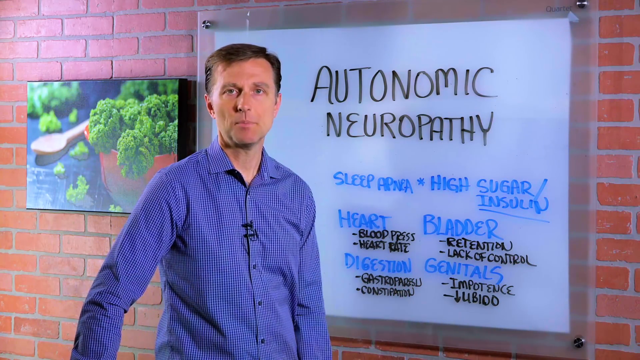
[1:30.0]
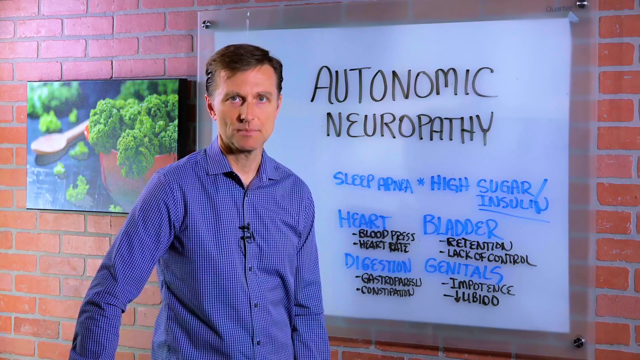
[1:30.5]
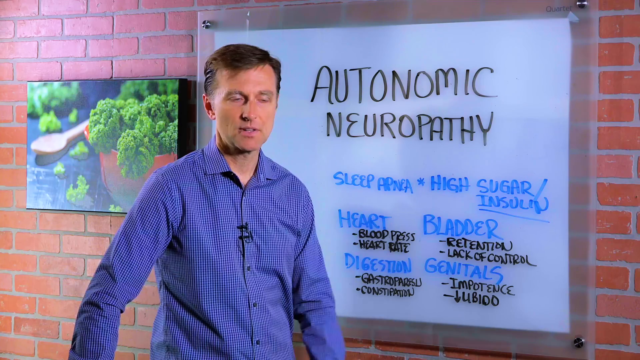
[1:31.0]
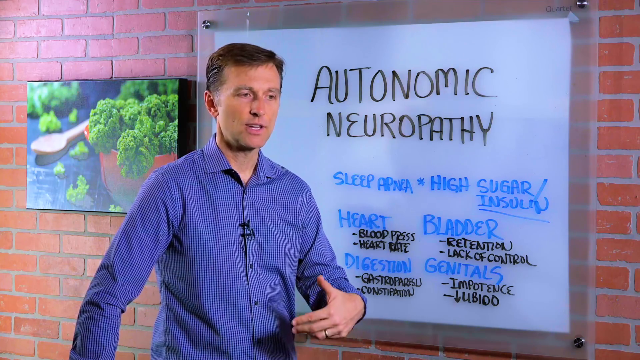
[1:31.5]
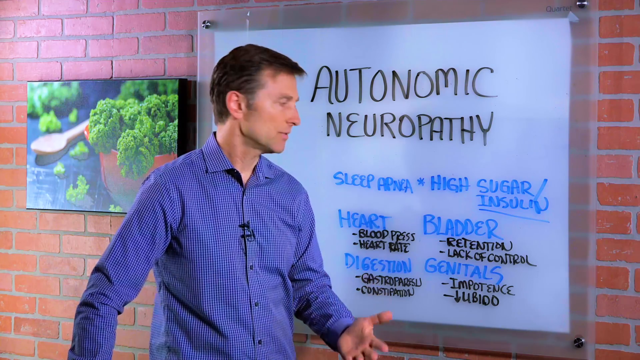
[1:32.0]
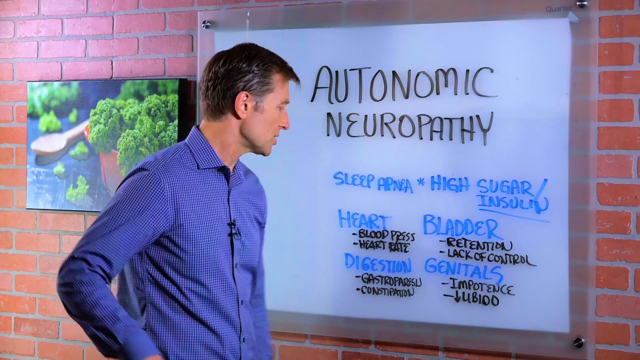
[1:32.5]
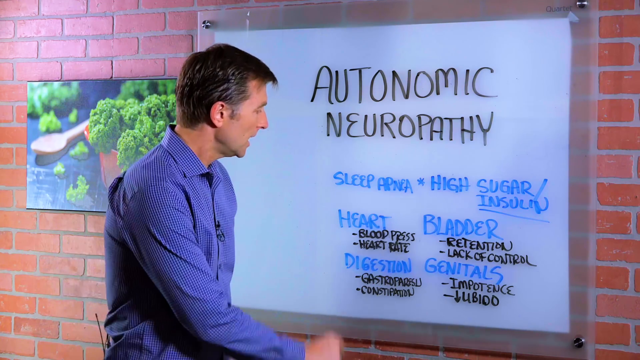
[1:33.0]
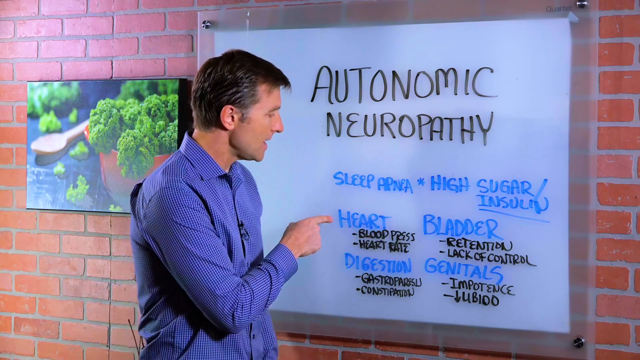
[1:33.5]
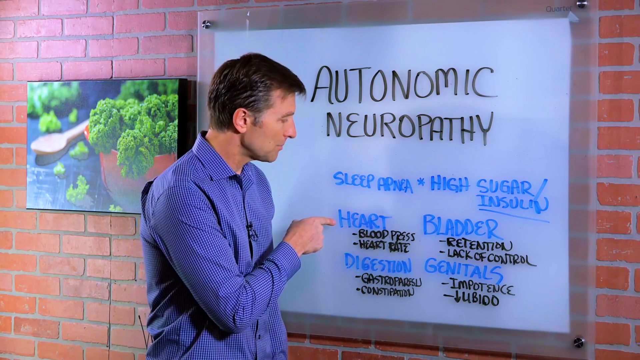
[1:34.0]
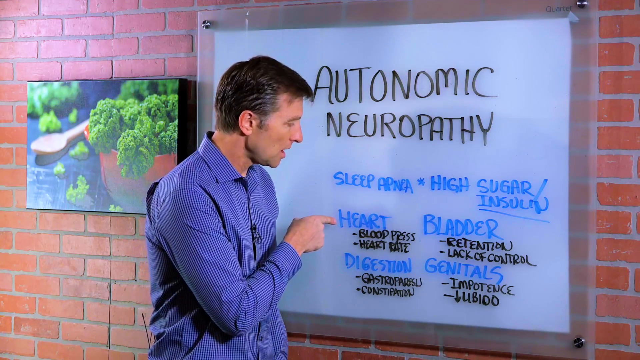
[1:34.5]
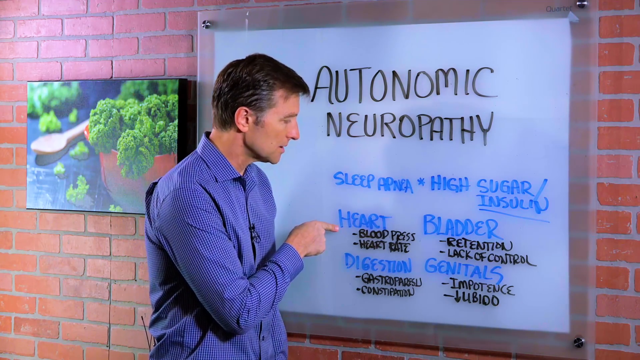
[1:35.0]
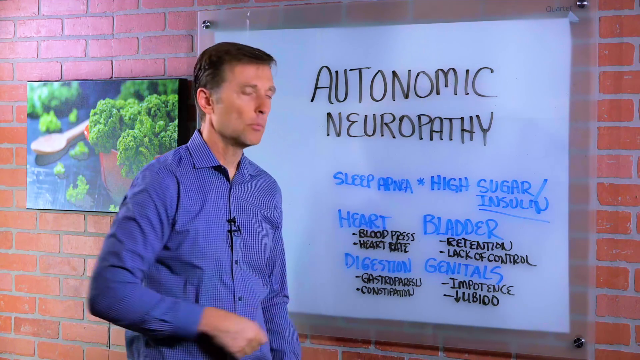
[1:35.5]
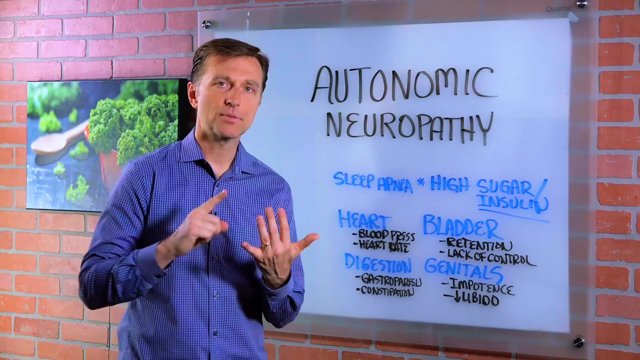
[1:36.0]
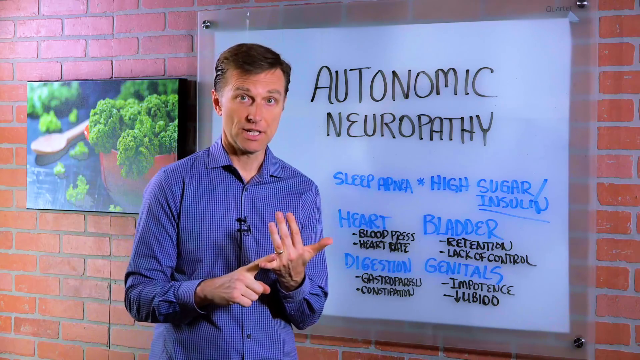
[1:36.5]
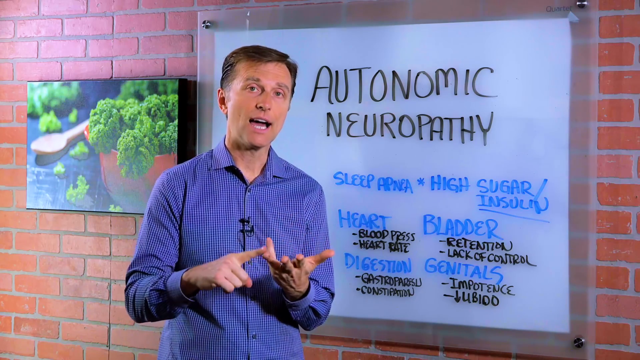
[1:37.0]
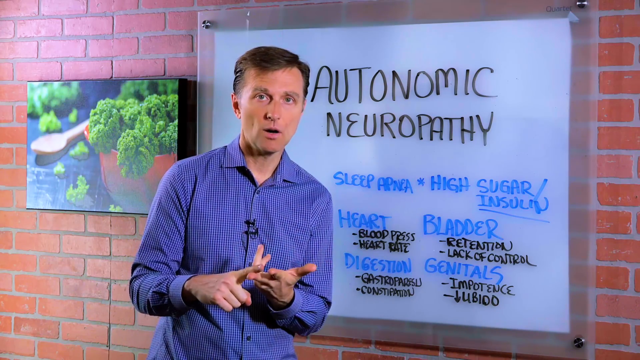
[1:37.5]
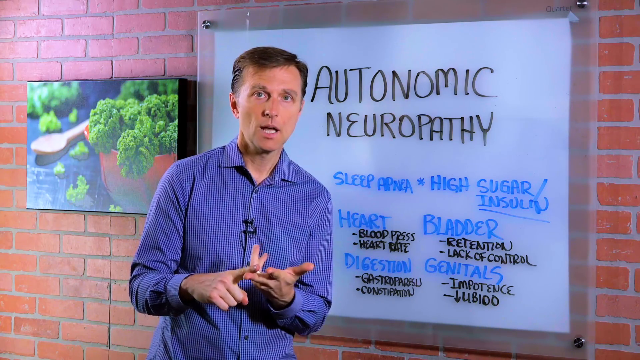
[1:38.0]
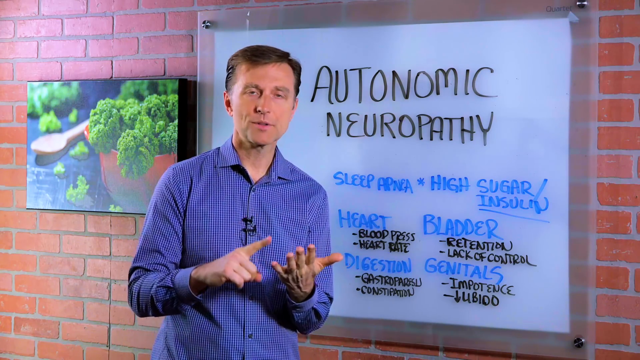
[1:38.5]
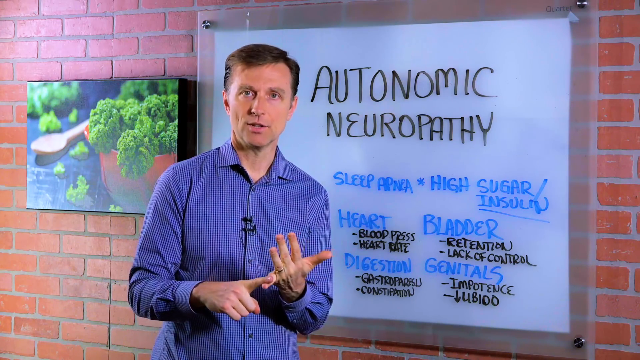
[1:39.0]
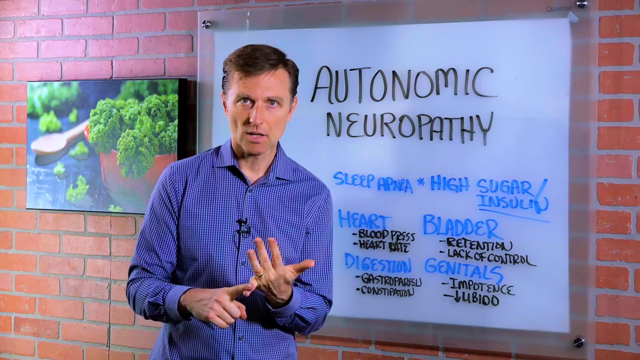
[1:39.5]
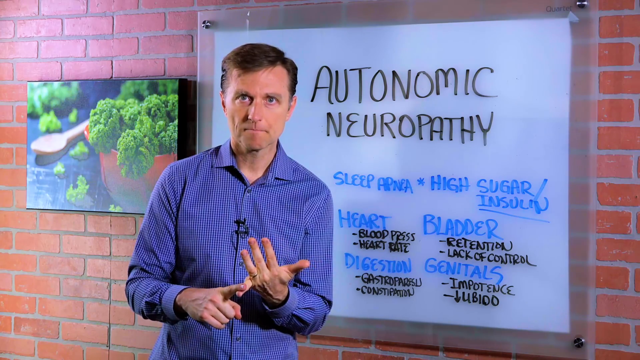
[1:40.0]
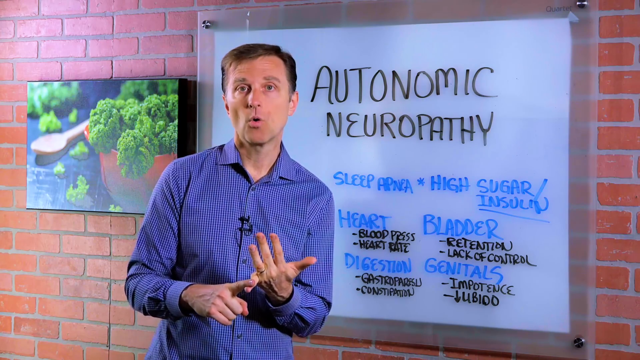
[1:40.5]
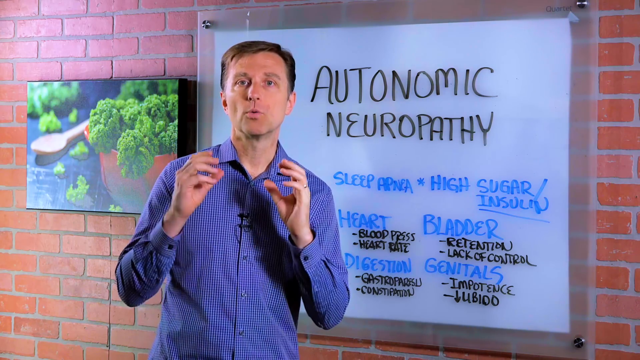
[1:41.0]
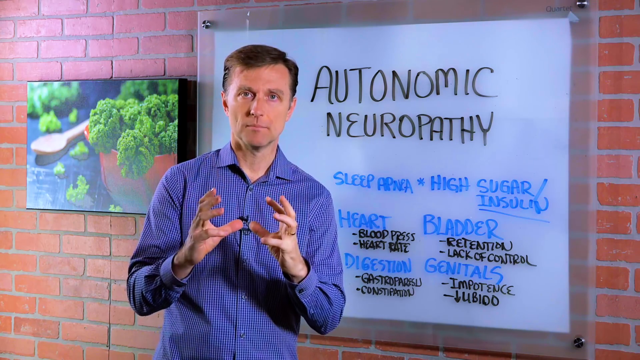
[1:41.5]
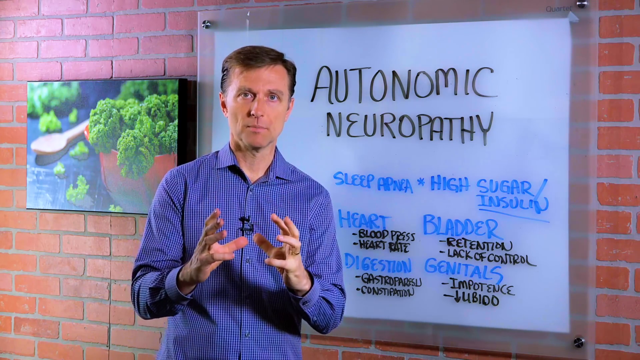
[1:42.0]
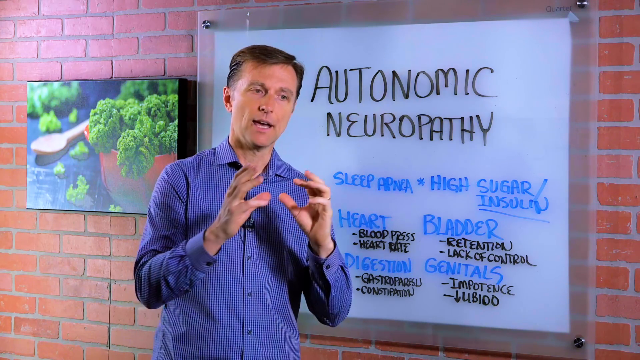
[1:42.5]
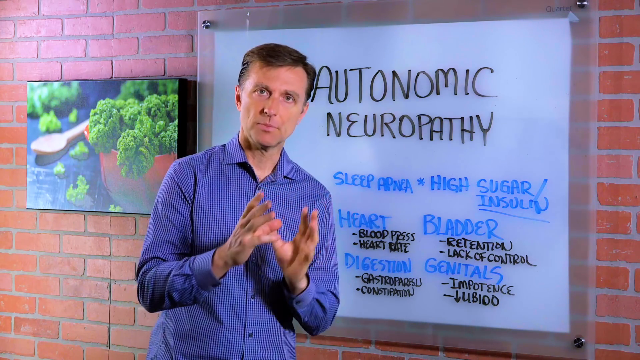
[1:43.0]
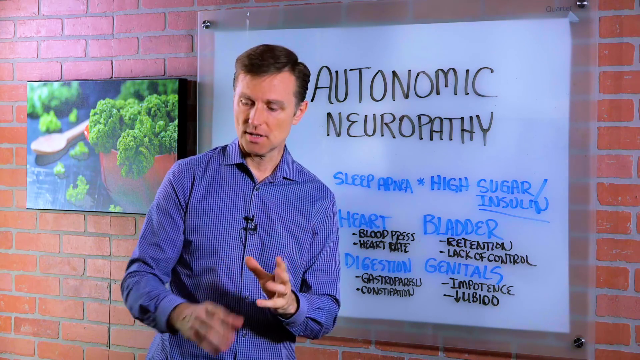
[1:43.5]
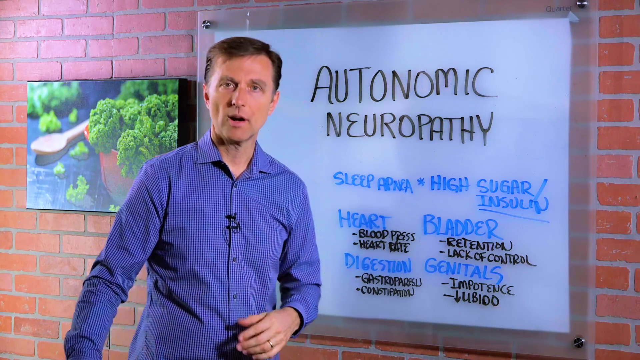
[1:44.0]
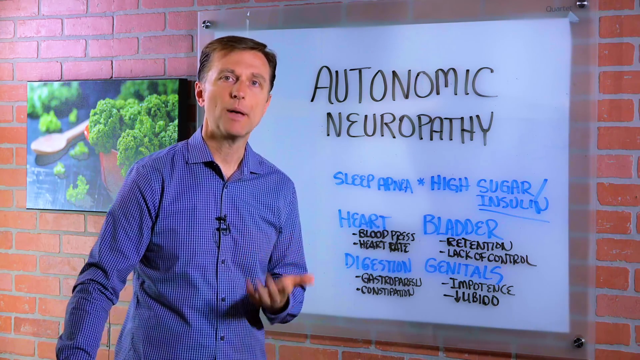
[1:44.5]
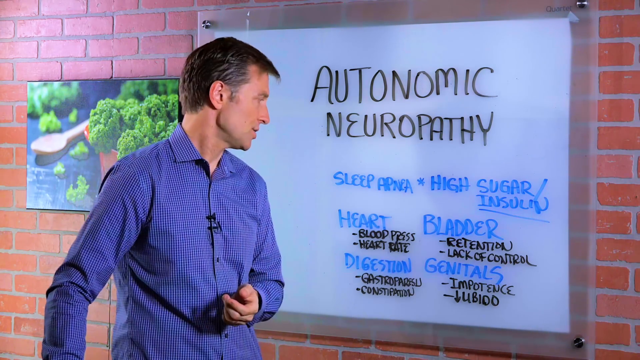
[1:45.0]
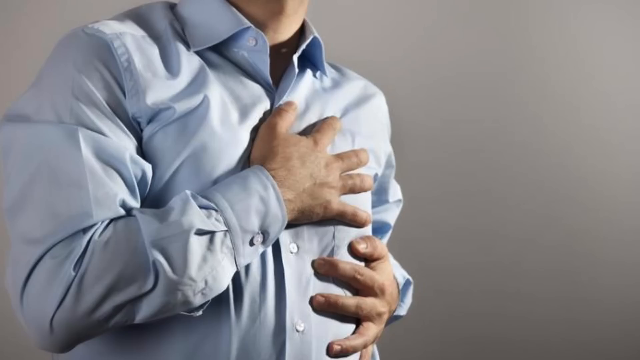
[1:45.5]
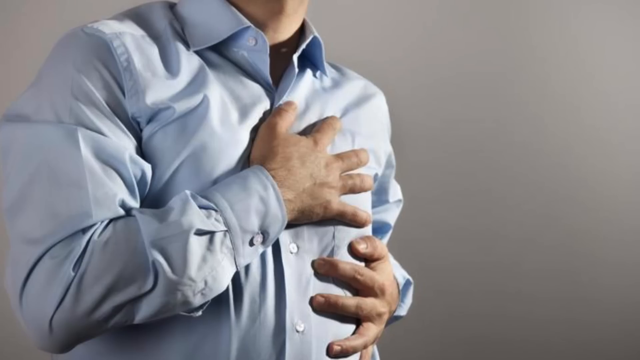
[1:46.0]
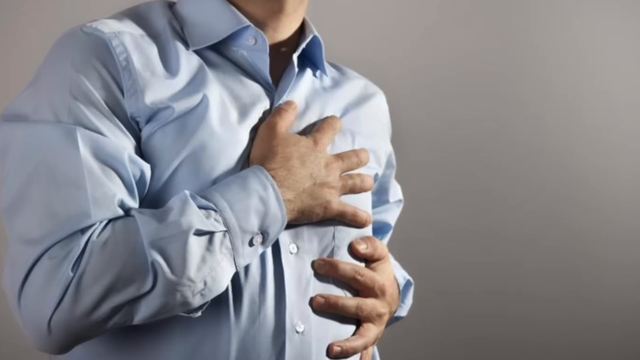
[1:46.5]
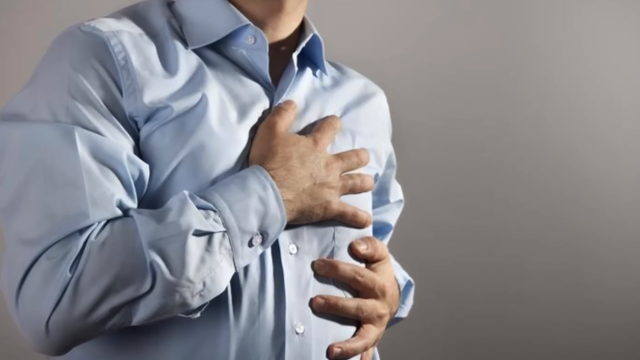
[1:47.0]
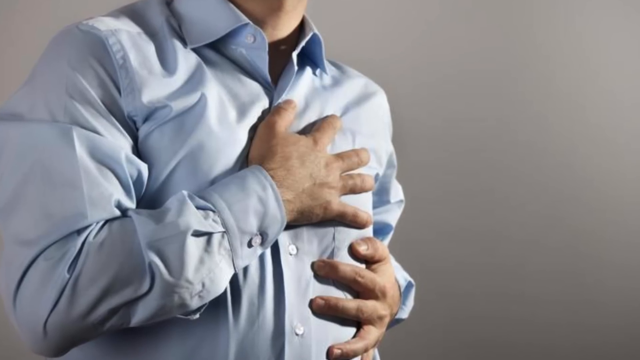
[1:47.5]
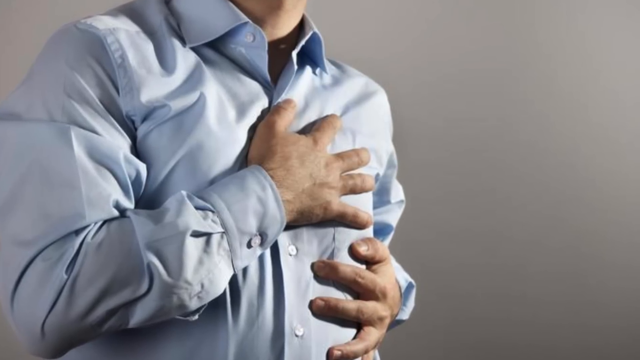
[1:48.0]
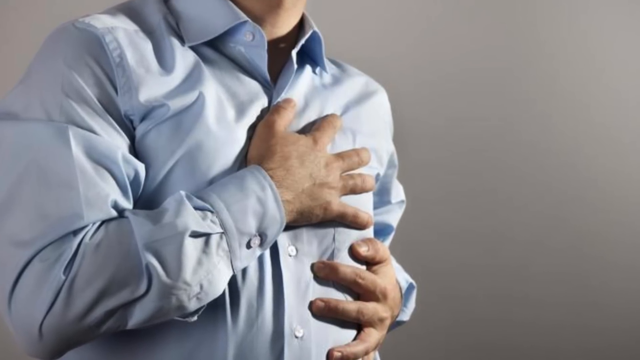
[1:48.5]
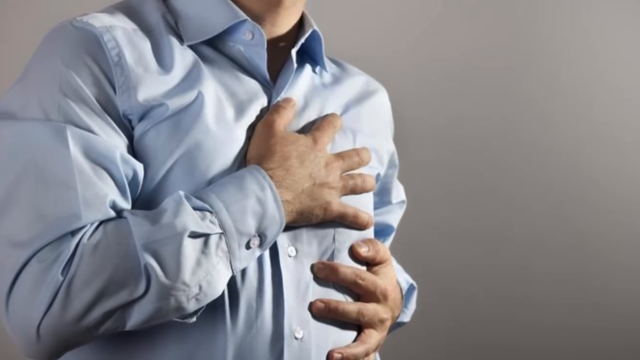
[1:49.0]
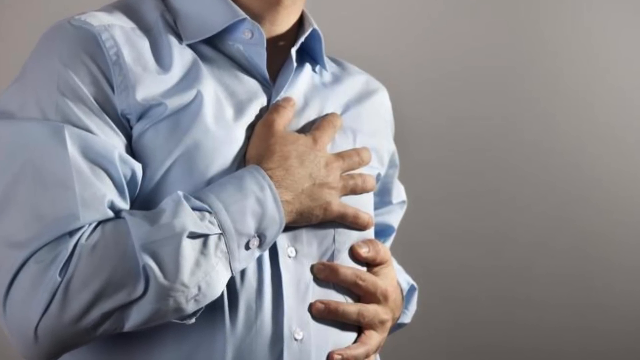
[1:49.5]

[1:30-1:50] Dr. Mandel points toward his whiteboard with his pointer finger, the outer portion of his hand facing the viewer and his other fingers pulled in toward his palm. He is seen from the side as he is slightly turned to his left, looking at the whiteboard, with his neck bent forward a bit. The arm he points with is close to his body and bent at the elbow. He then turns back to his audience as he continues speaking, now with both arms close to his body and bent at the elbow. He uses his right pointer finger to touch down on his left pinky finger. His left hand faces upward, showing more of the back of the hand than the palm, with the fingers outstretched, while the rest of the fingers on his right hand are folded in toward the palm.